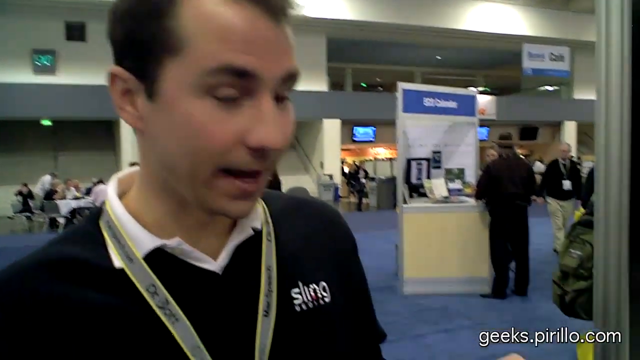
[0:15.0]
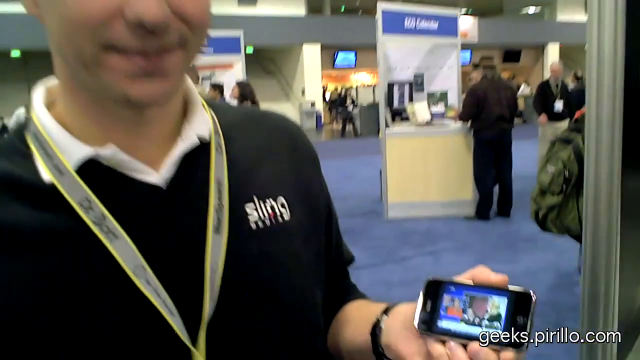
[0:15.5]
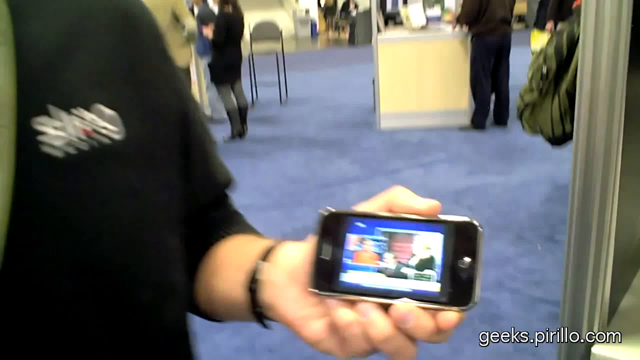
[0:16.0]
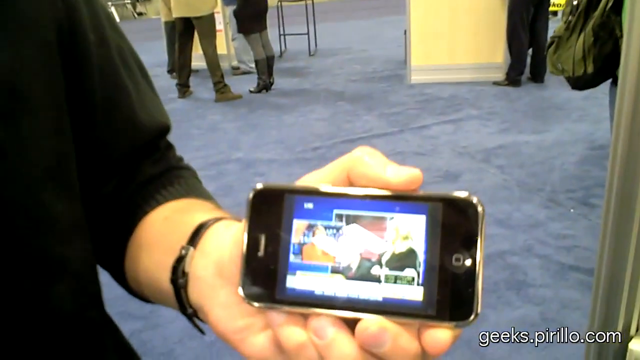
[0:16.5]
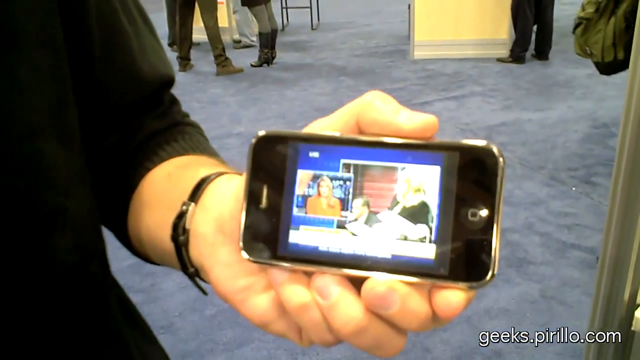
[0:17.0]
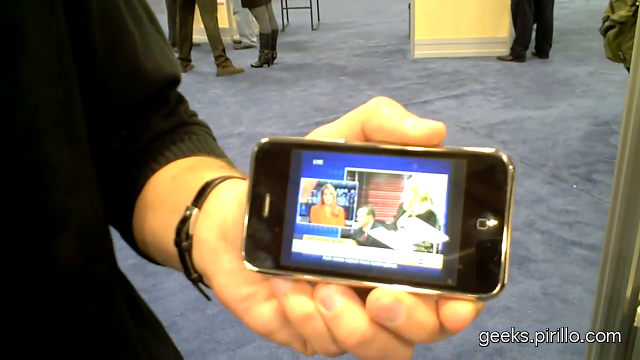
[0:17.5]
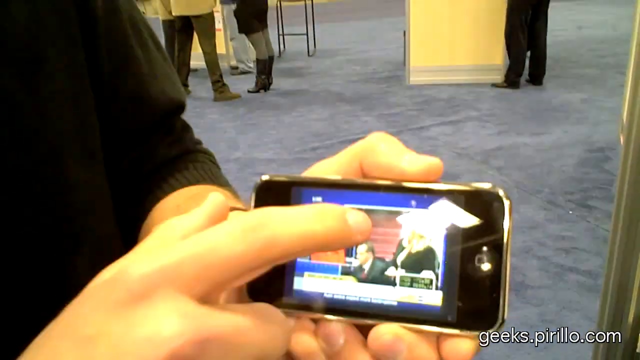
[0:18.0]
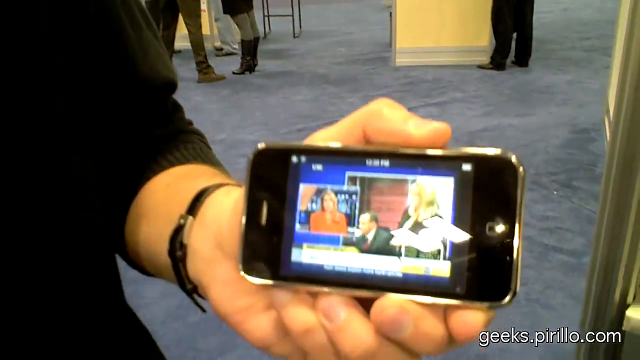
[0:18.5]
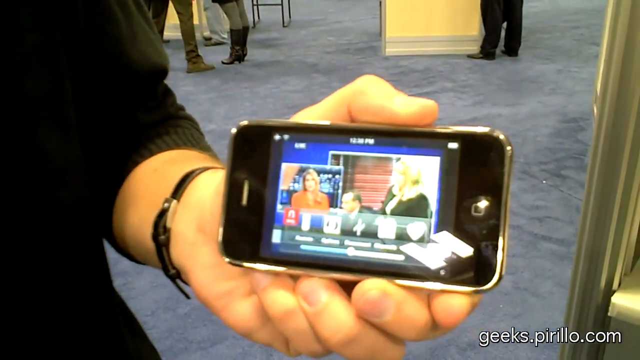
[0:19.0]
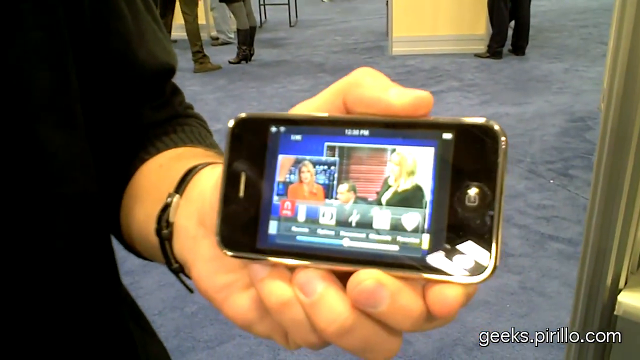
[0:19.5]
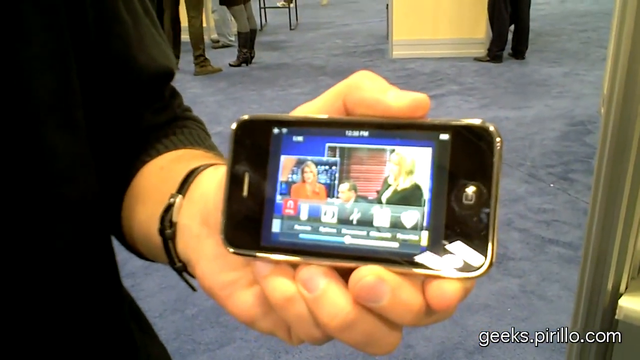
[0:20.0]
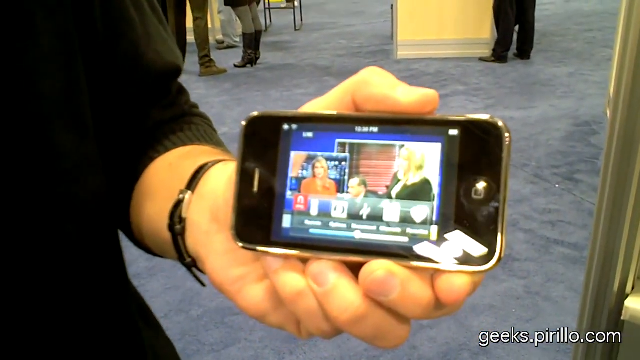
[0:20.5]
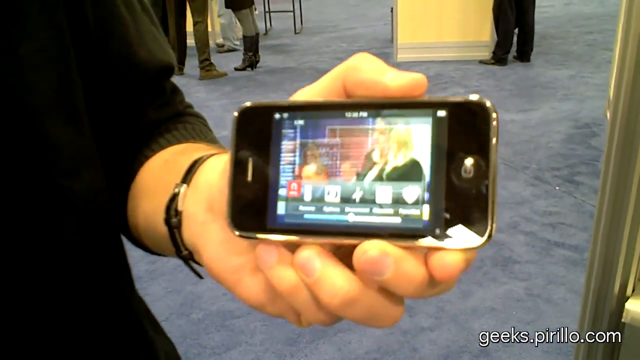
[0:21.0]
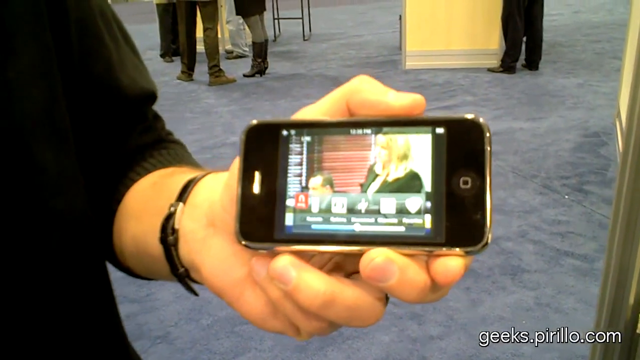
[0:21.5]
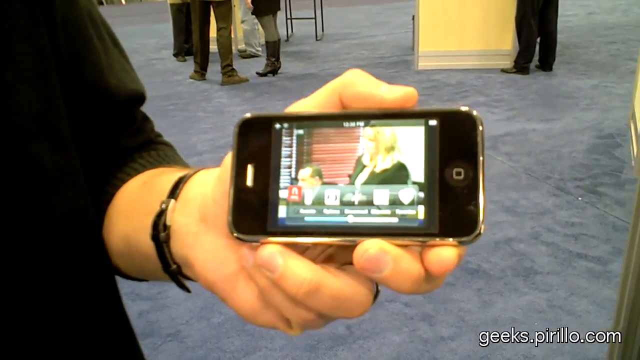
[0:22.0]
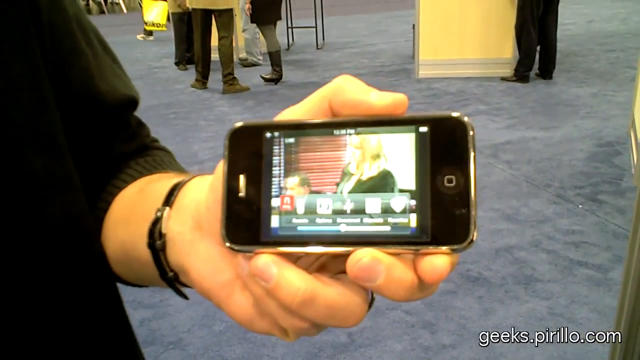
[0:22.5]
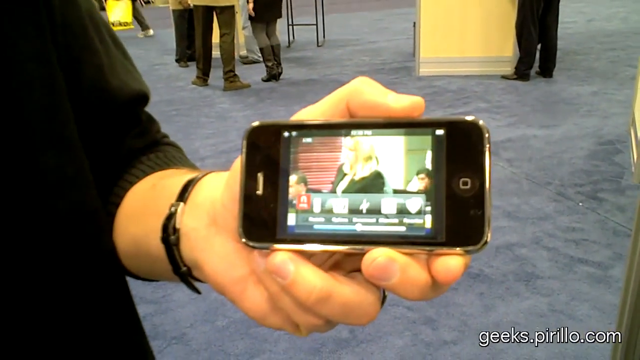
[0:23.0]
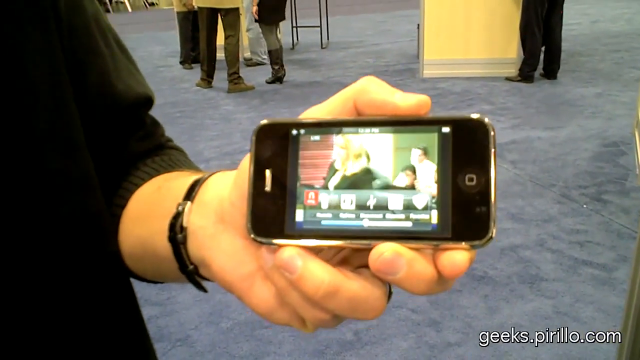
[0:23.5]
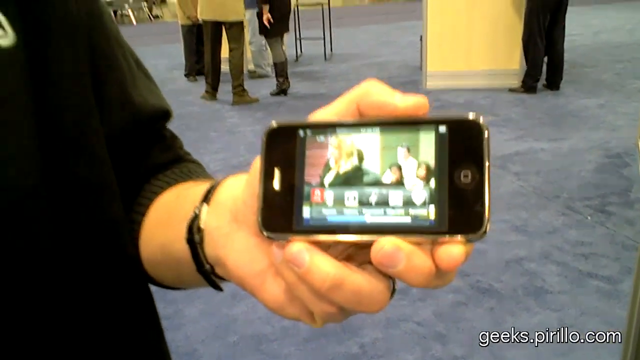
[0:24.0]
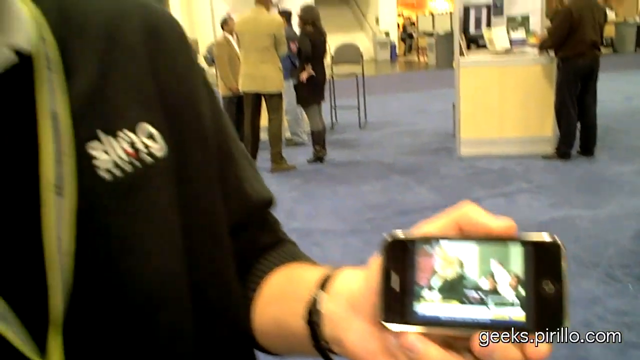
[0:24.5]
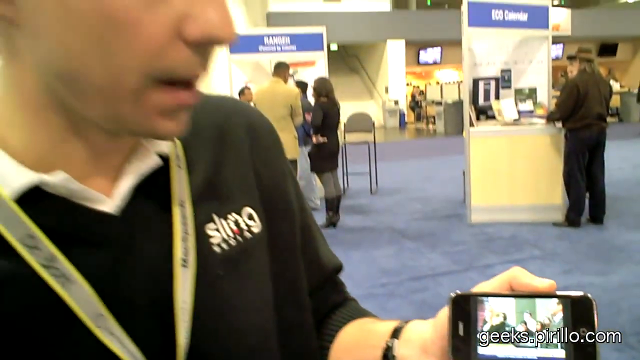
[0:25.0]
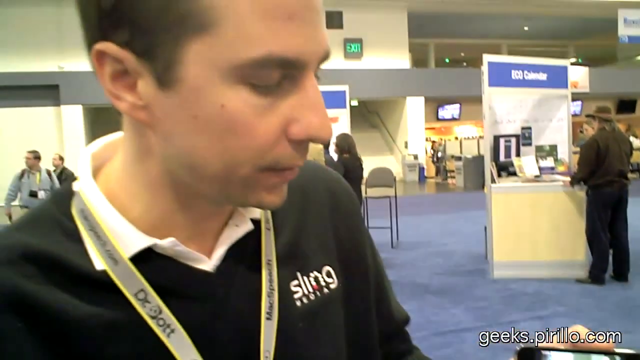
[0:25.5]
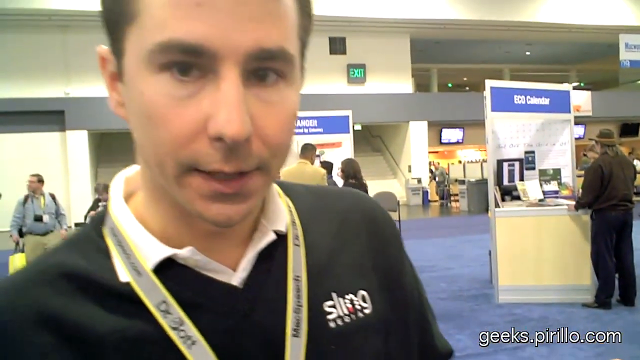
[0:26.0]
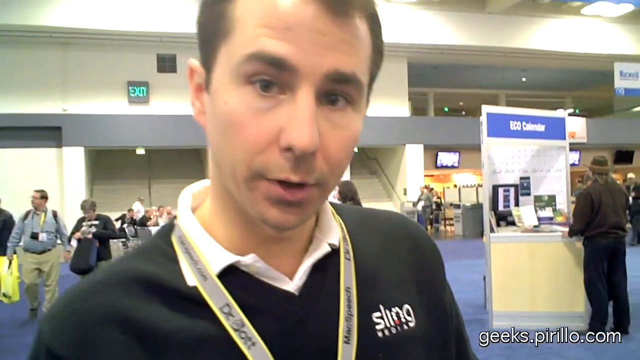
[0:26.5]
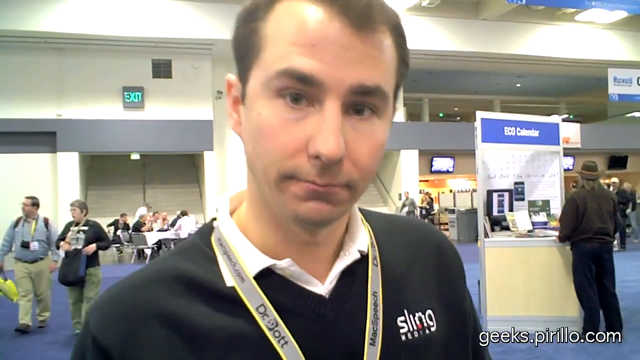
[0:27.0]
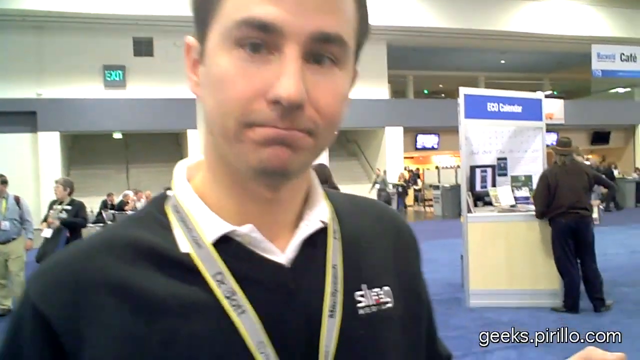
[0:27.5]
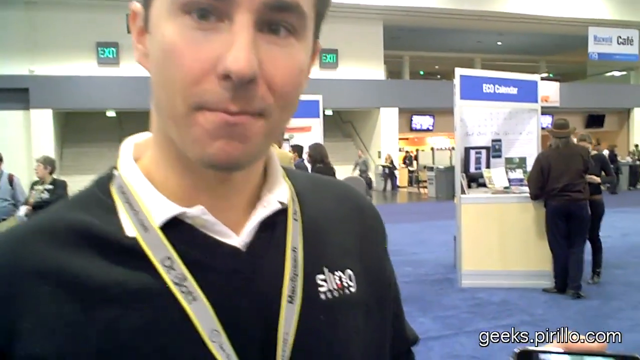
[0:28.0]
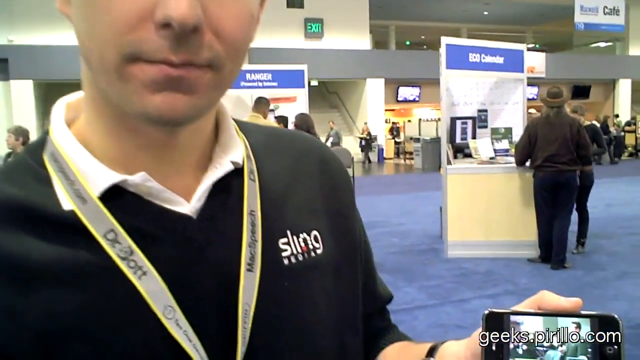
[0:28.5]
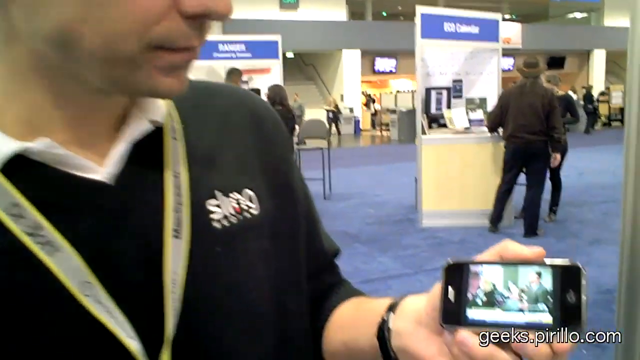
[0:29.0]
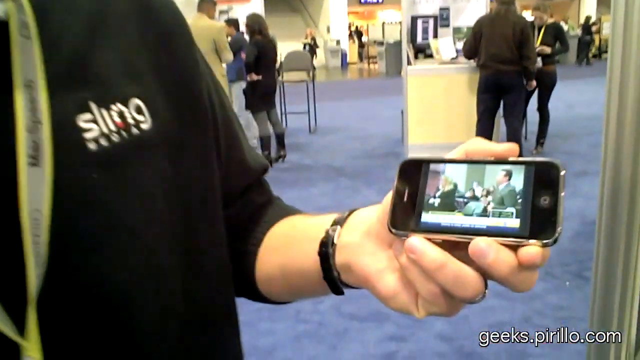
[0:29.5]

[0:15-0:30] At the convention, "geeks.parillo.com" appears in the bottom right-hand corner, with a transparent thumb emoji behind this watermark. The man in the Sling sweater shows a horizontally held iPhone displaying some kind of news program, with a slight glare from the lights on it. The camera pans back out to the man, whose mouth moves as he says something, then he kind of nods and smirks. The camera zooms back in on the iPhone, which he touches.